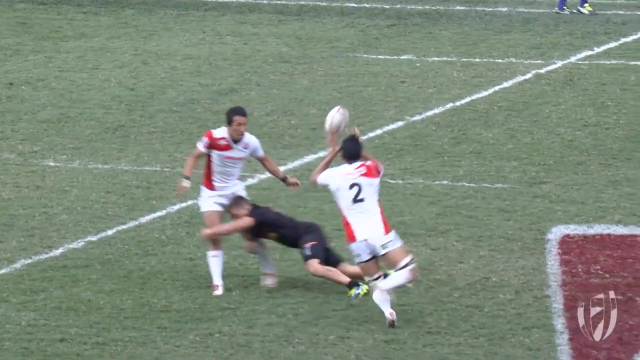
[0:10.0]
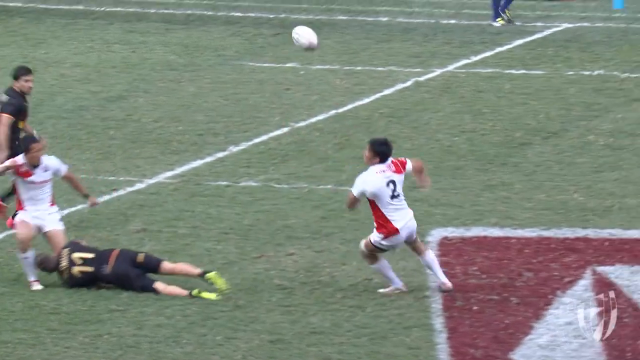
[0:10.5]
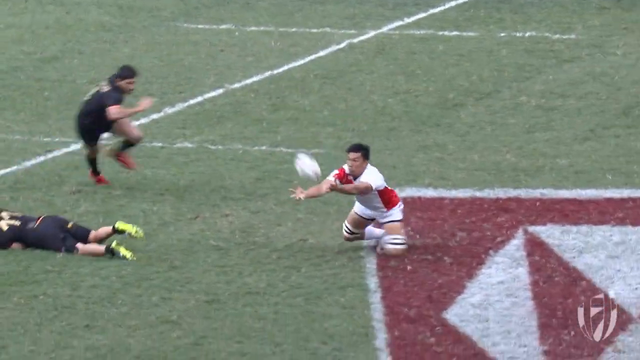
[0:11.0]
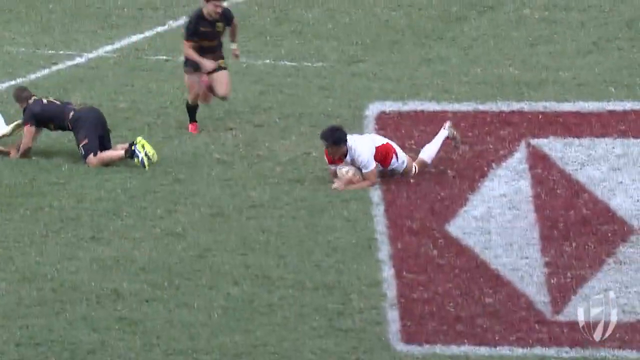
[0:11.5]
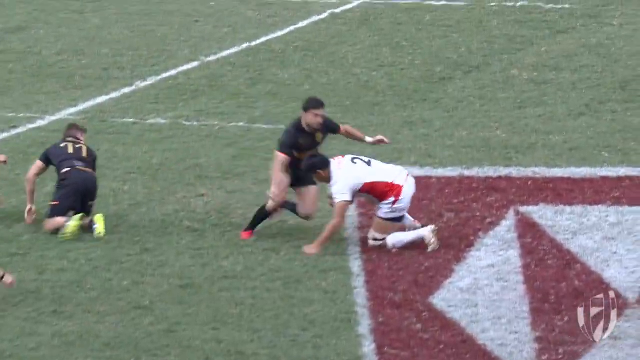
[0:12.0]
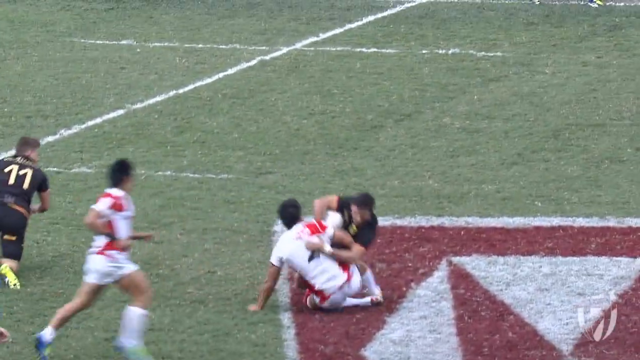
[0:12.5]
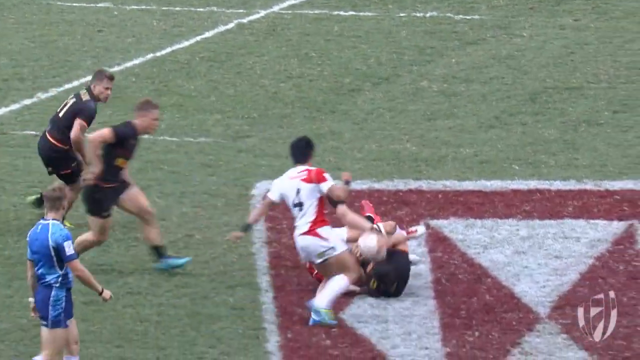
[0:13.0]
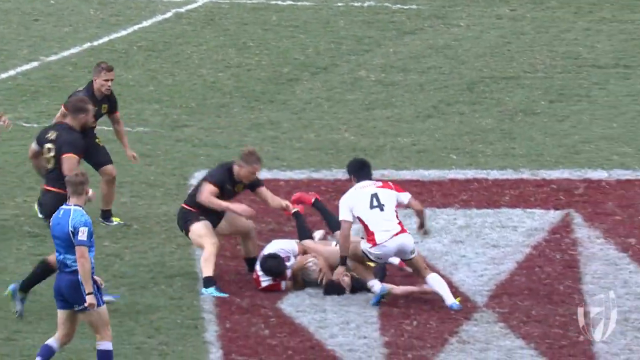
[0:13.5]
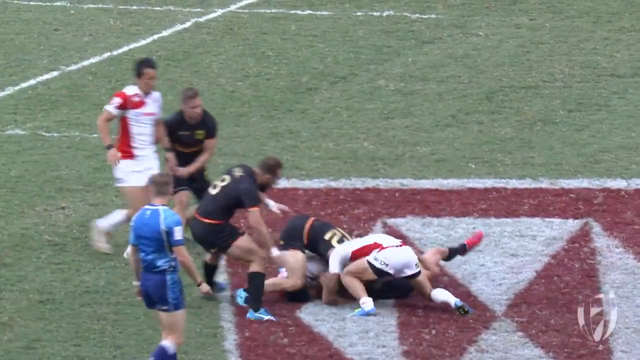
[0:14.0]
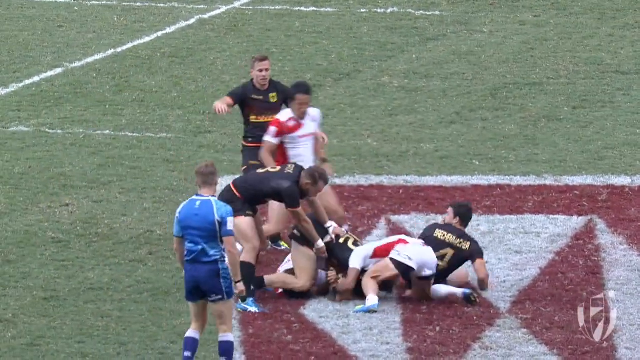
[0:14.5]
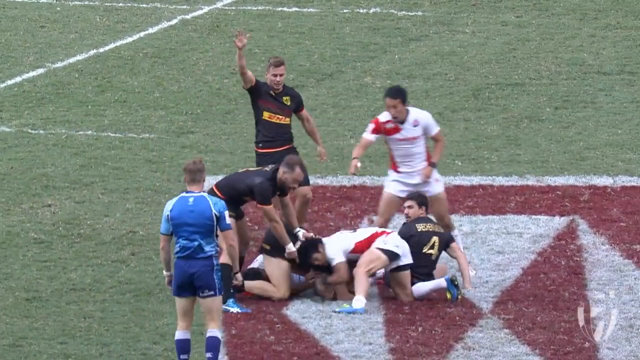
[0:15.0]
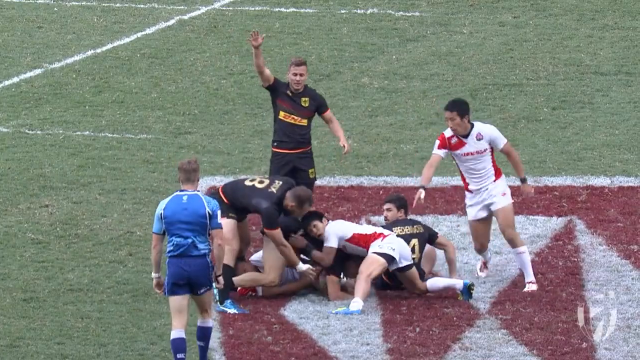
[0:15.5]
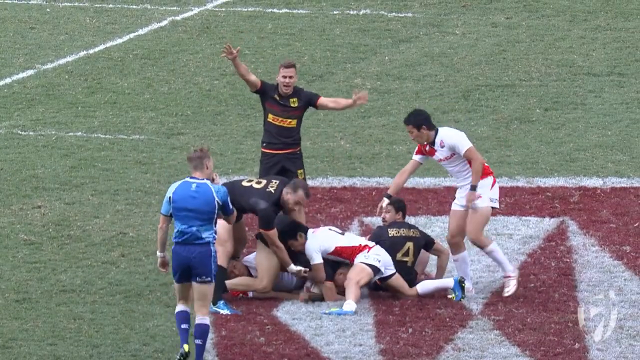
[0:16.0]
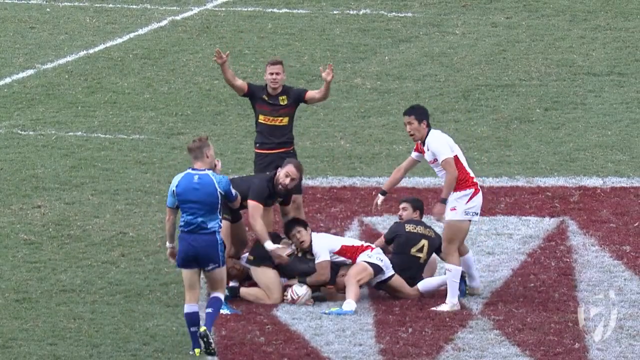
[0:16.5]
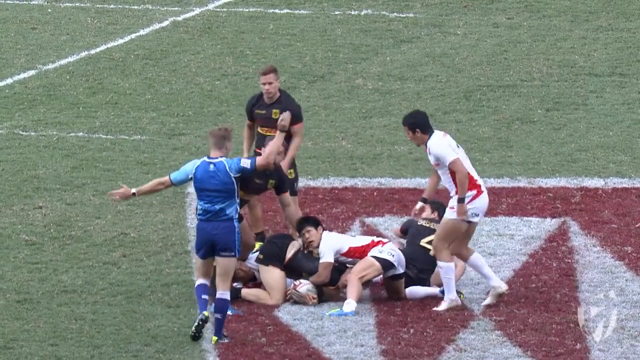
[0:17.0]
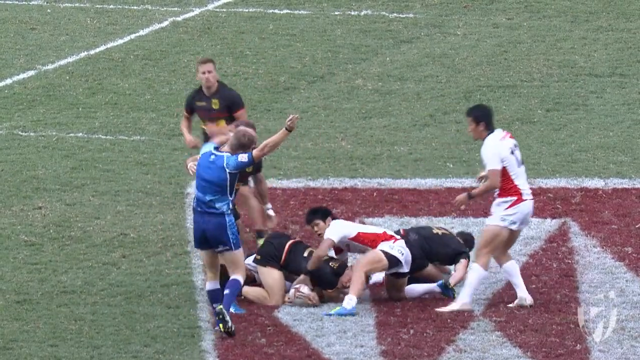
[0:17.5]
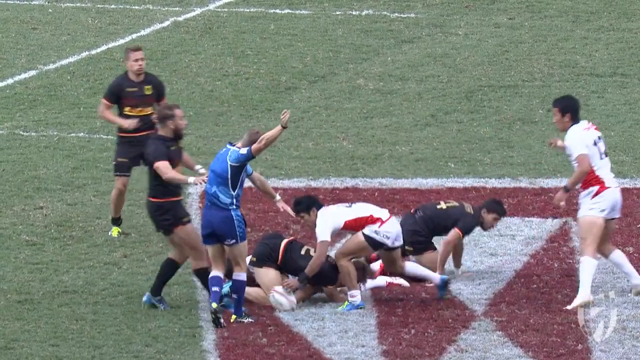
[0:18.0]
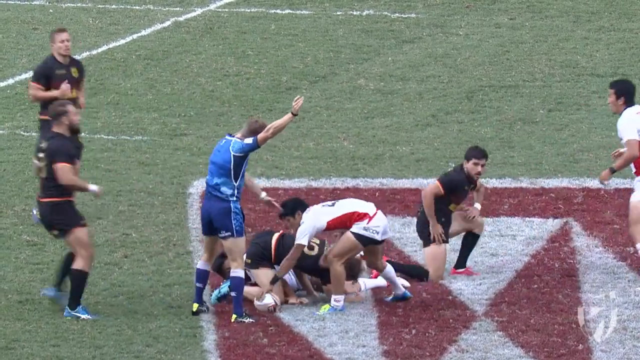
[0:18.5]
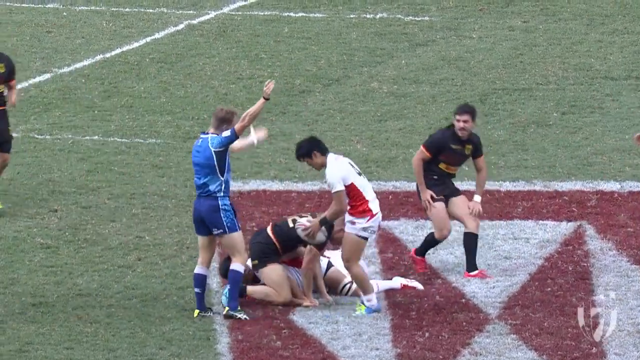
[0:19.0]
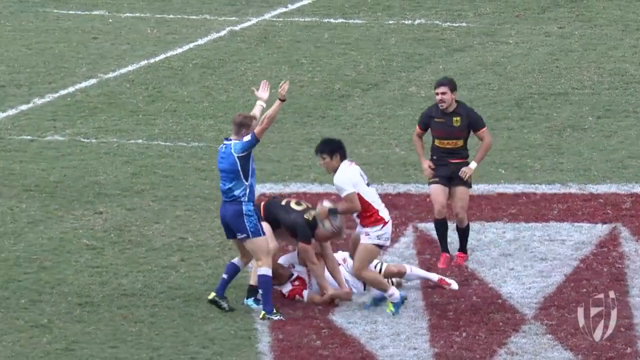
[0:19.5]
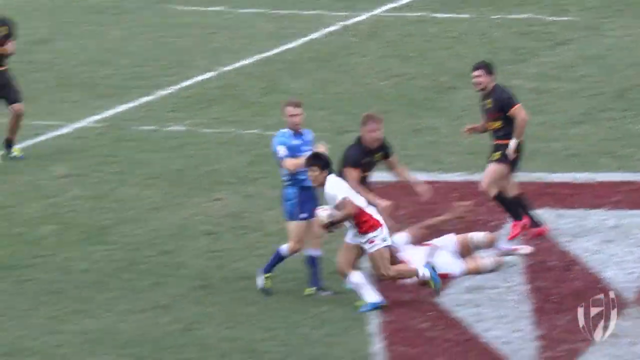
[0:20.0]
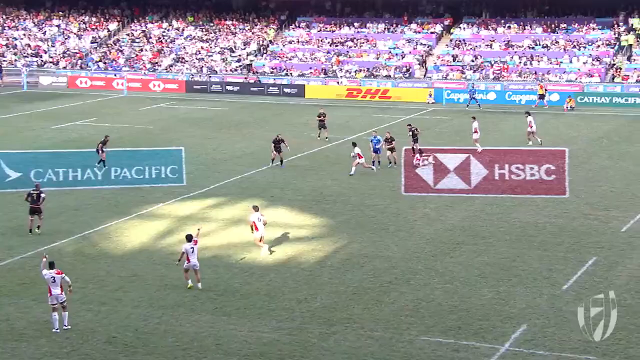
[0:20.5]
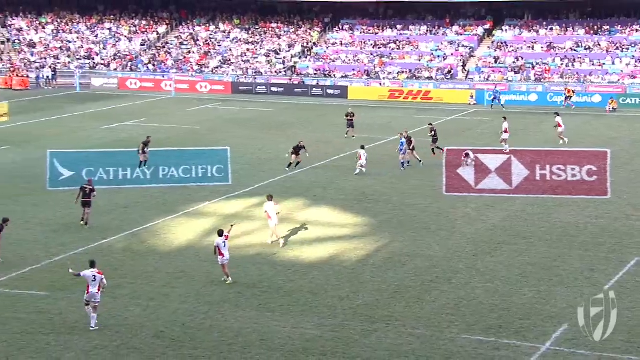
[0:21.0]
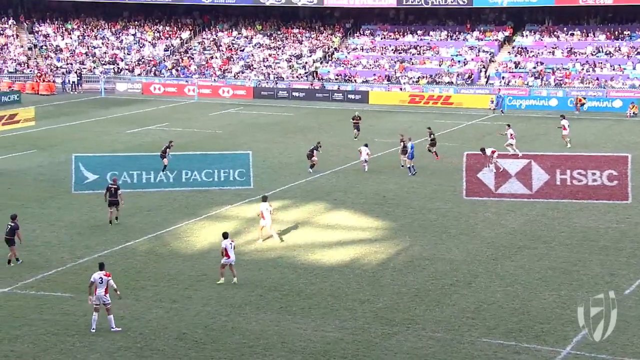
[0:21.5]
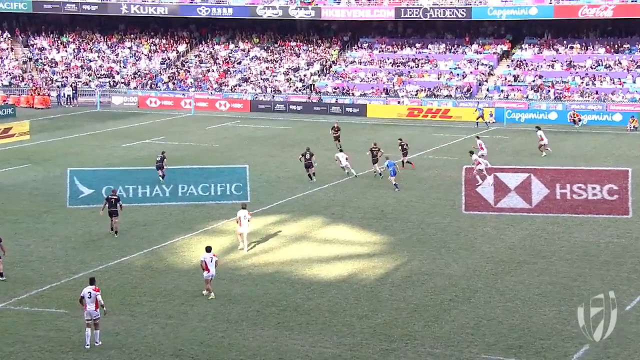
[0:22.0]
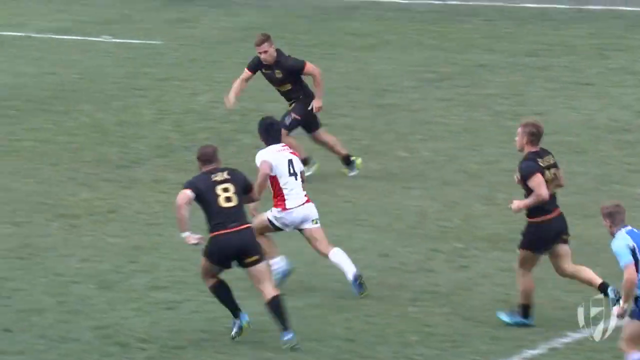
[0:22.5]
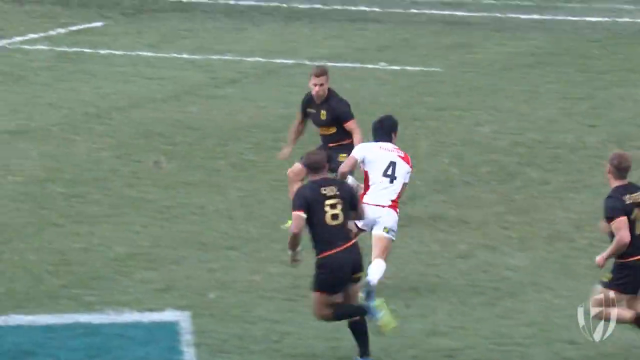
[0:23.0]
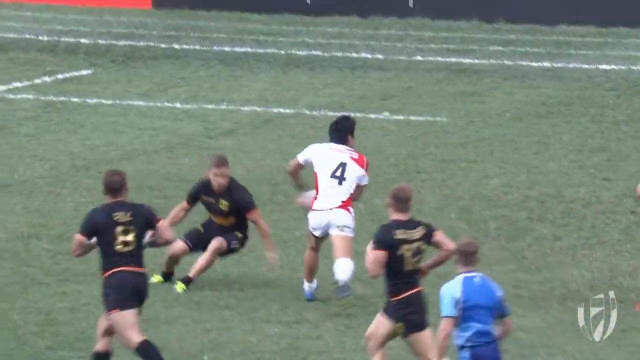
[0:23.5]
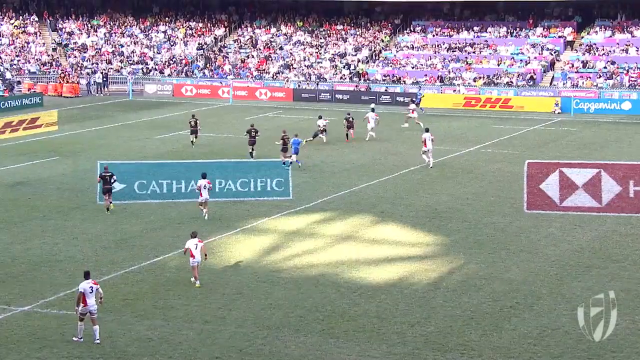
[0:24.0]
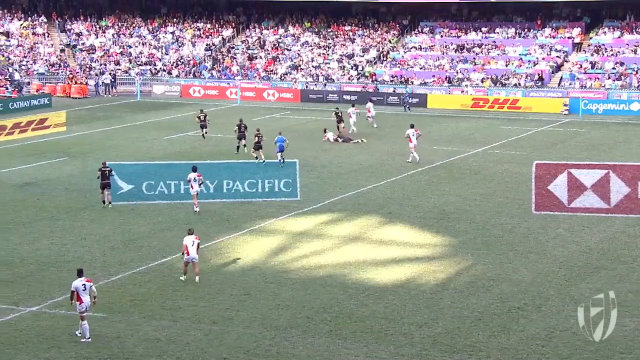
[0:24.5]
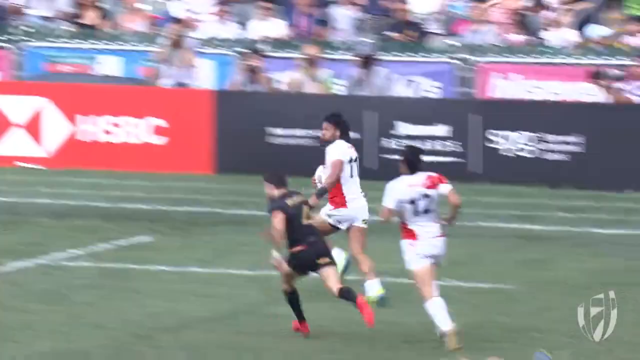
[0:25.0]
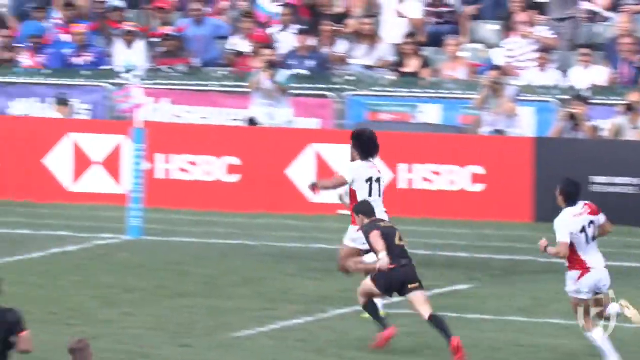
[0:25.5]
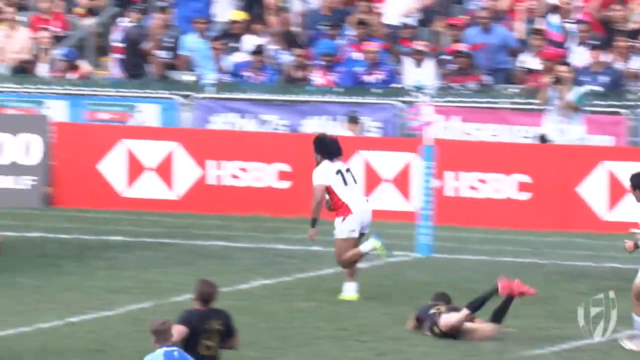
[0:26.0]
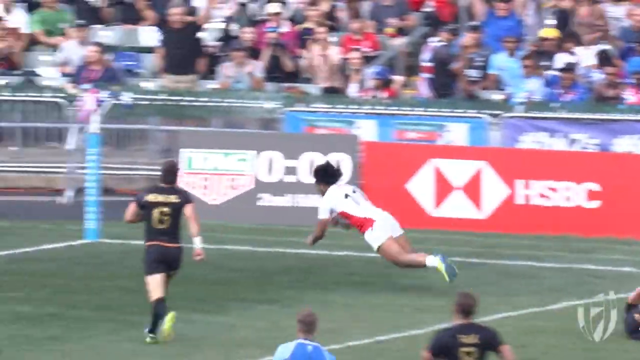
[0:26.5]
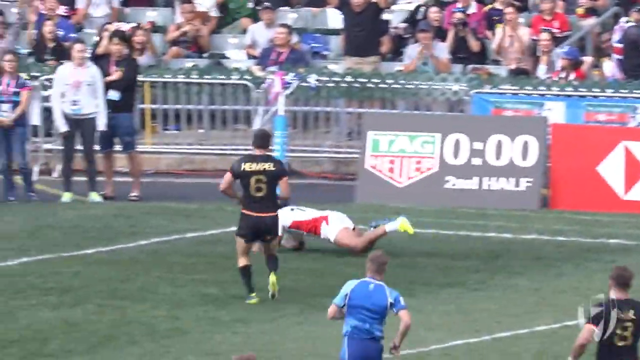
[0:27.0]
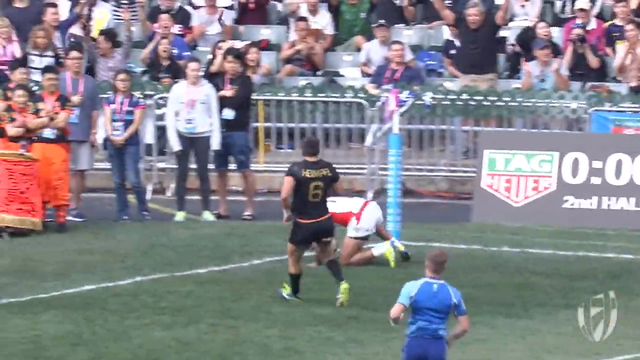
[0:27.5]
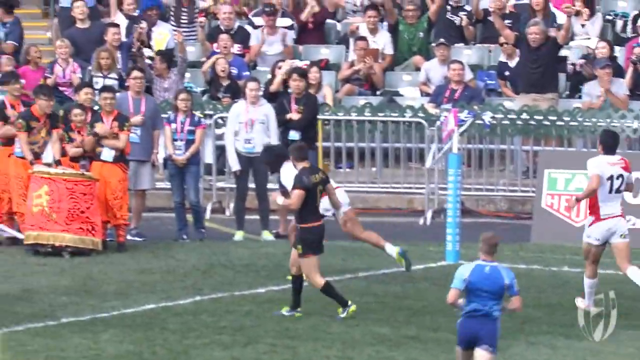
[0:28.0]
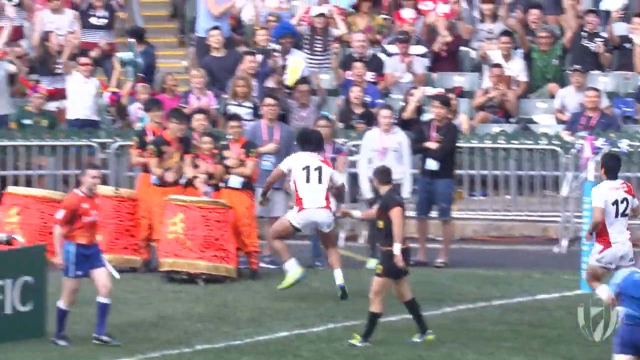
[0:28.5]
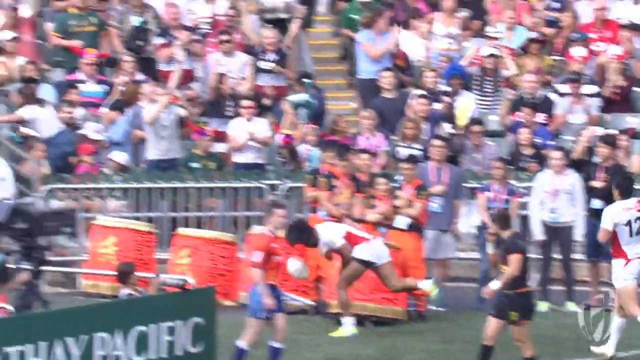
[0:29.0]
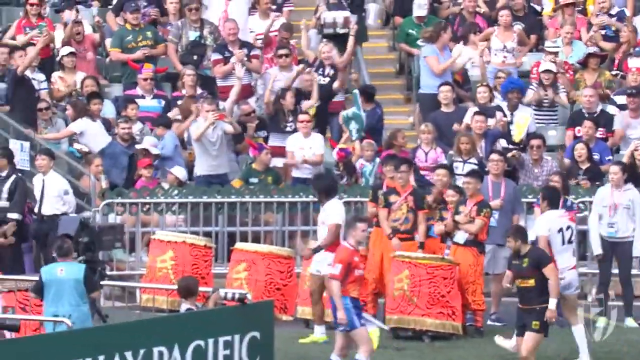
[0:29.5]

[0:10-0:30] The video is wider than it is tall. A line runs across a big green field from the upper right corner almost to the lower left corner. Just right of the line, in the center near the bottom, are three men in two different styles of uniform. A man in a black uniform tackles the man to his left, almost horizontal as he grabs both of his legs with each of his arms. The man on the left looks to the right, at a man in the same white uniform with red on the sides. The man receiving the ball on the right has a black number two on his back. He catches the ball, throws it up, grabs it again, and is tackled by another man from off-screen, and then another man piles on to make sure he is down. A player from the white team then gets the ball, runs left, and passes it to number four. The camera zooms in on number four. Three players are around him like a triangle, two vertically in the middle and one in the lower right corner. He runs between the right player and the top player and hikes the ball to the right, where number 11 catches it. The camera zooms in on number 11 as he runs down the field to his left. He dives right into the end zone, spikes the ball, and does a muscle-up.